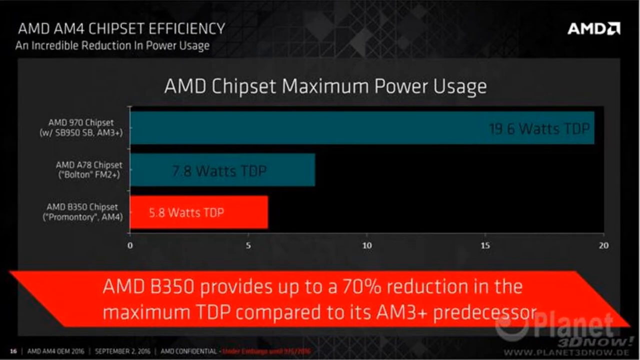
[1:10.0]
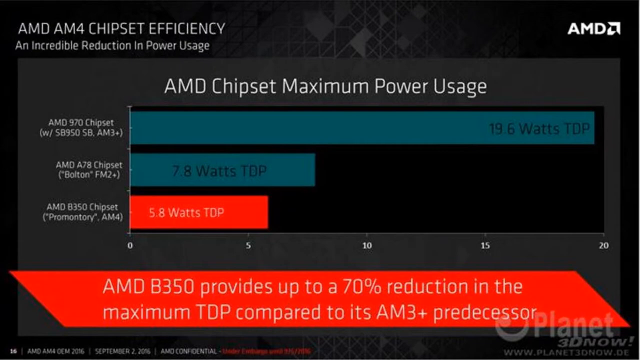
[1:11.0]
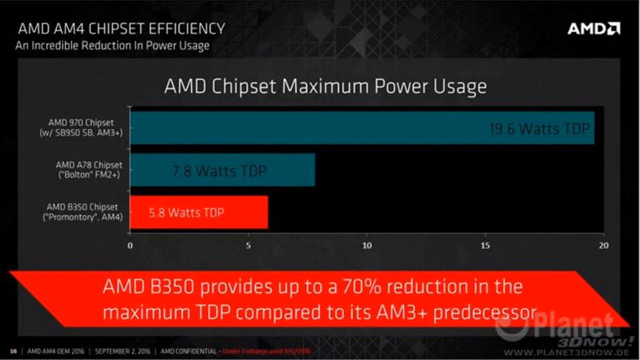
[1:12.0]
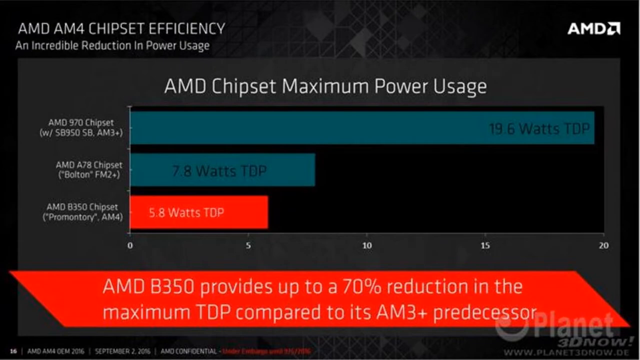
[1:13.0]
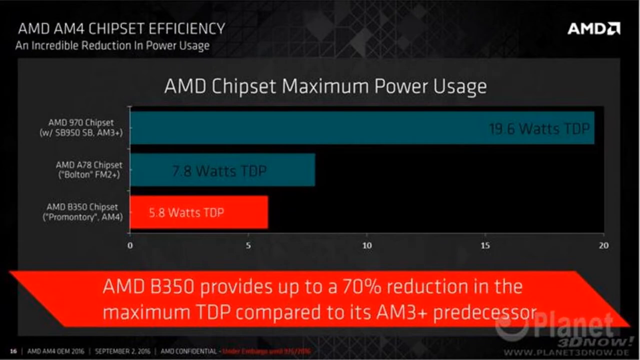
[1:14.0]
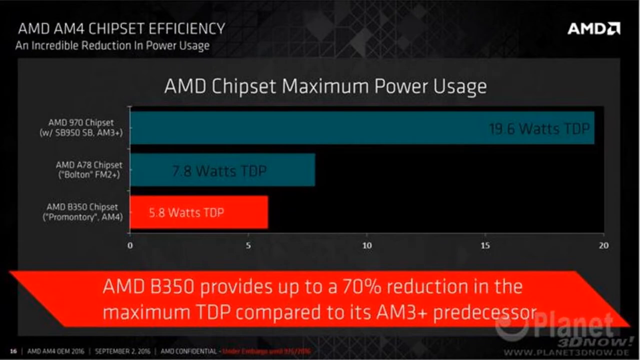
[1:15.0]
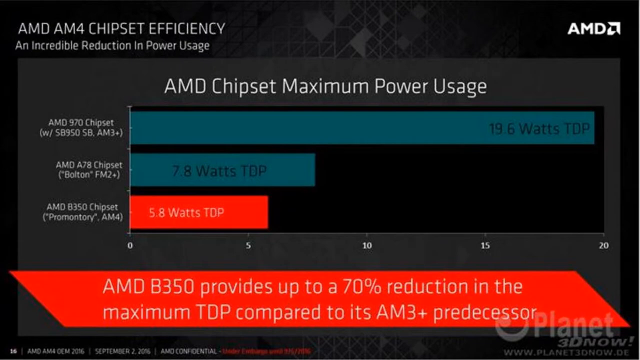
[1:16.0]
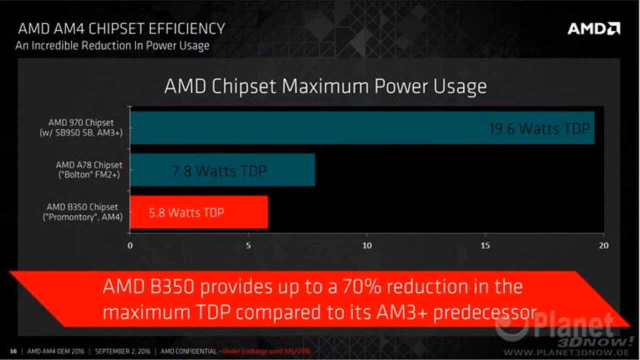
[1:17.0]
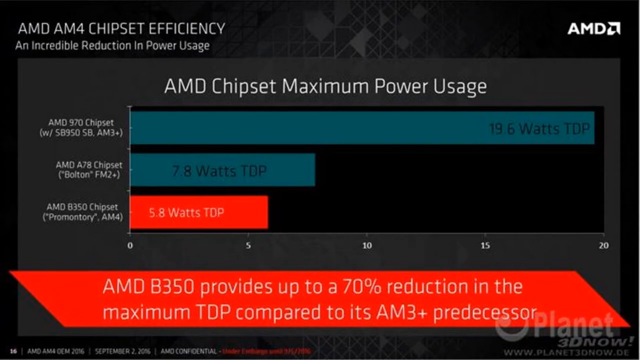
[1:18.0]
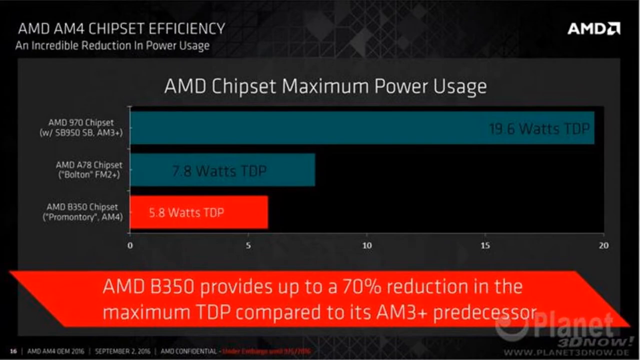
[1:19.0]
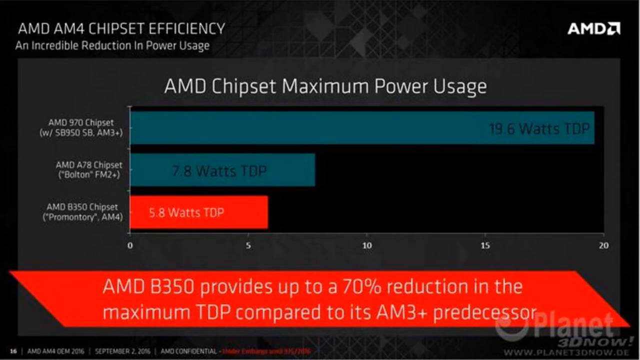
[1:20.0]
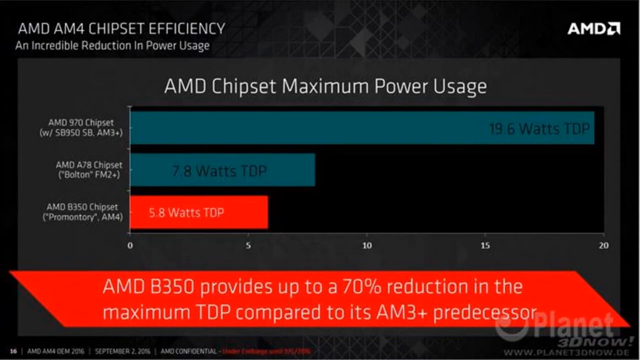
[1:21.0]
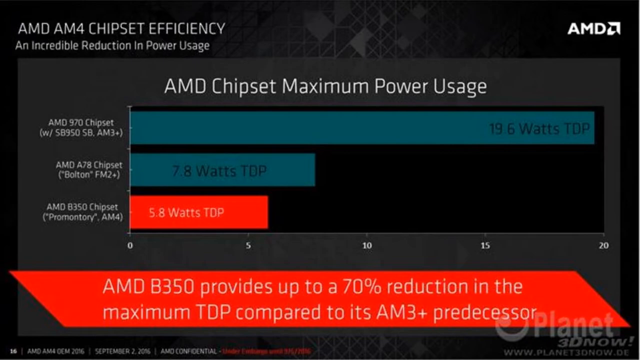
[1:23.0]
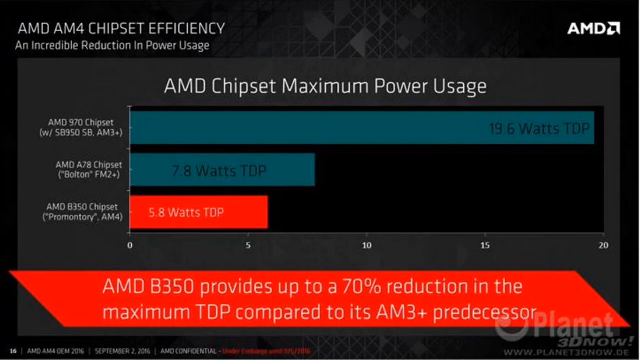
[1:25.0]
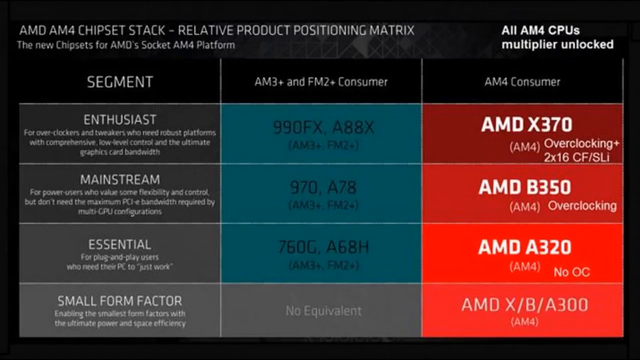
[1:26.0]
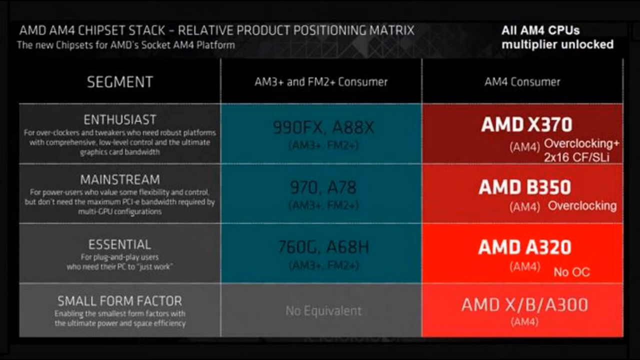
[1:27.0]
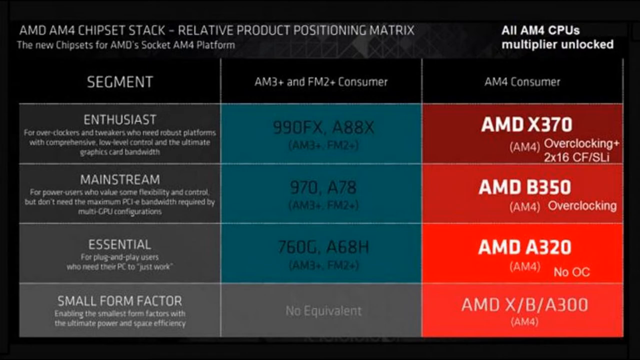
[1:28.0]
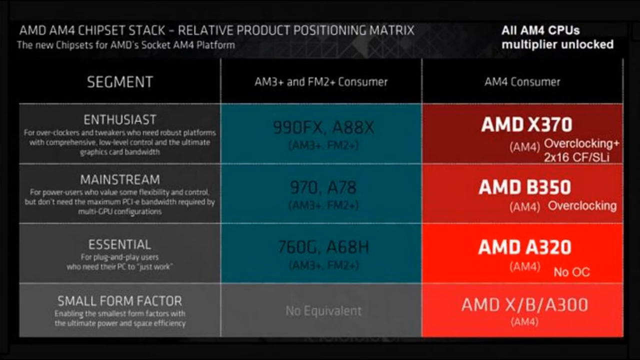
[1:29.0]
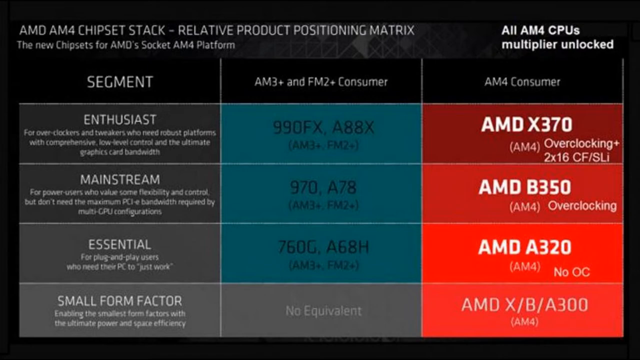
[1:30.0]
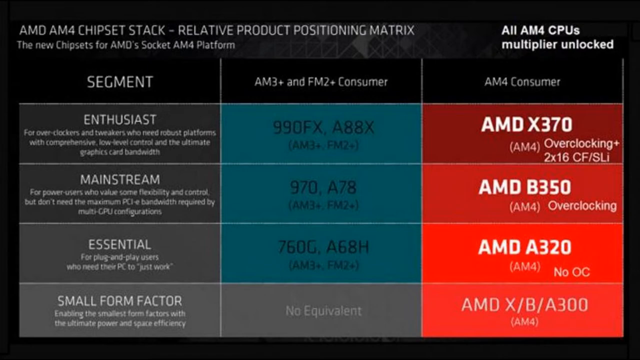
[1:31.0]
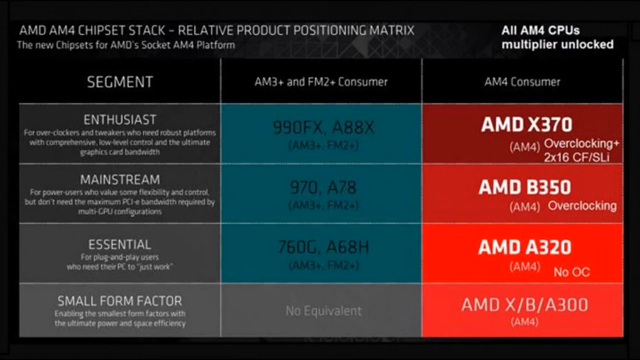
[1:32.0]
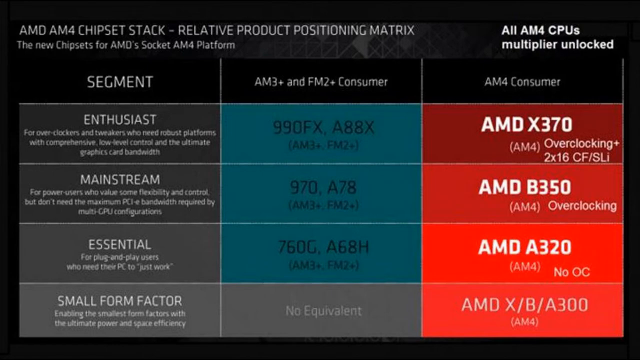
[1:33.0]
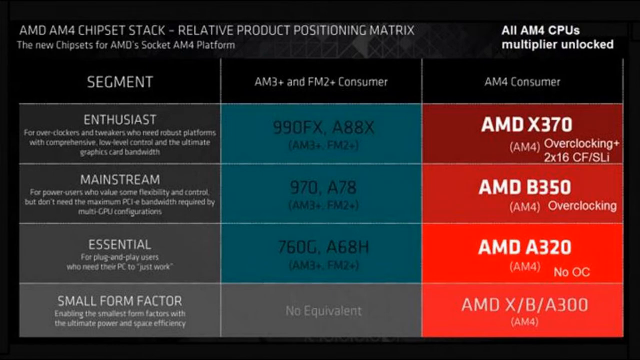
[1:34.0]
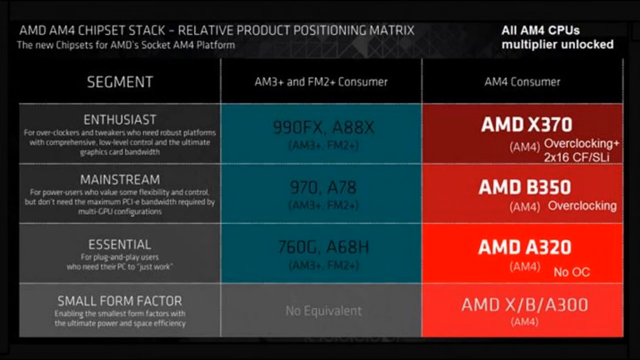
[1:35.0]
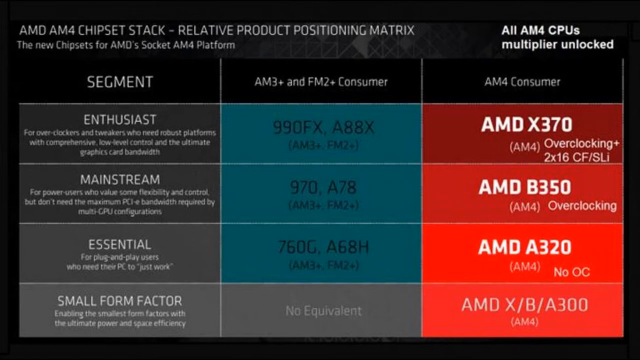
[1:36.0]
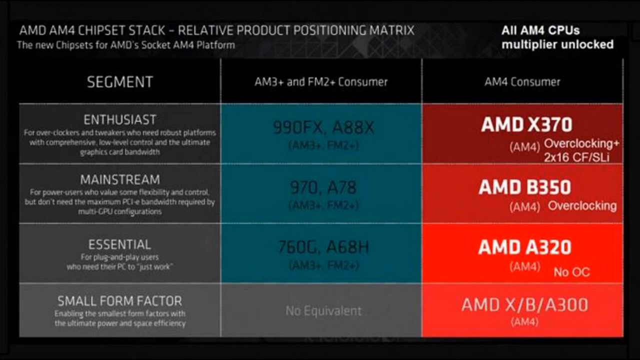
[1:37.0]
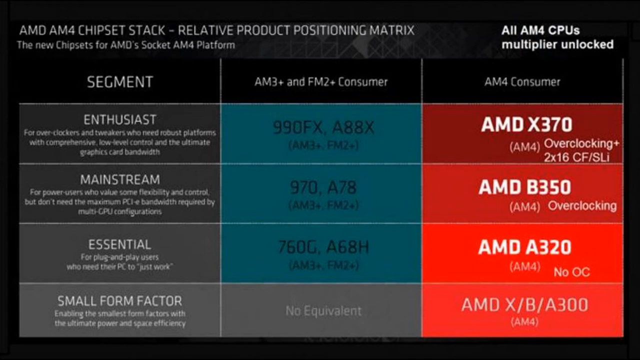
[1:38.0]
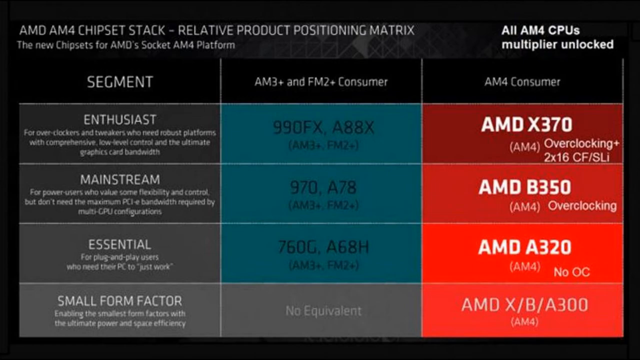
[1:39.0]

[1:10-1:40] The AMD AM4 chipset efficiency chart stays on screen. The video then switches to a table with the headers segment, AM3+ and FM2+ consumer, and AM4 consumer. In the enthusiast row, the options are the 990FX (AM3+) or the A88X (FM2+), versus the AM4 AMD X370 with overclocking. The mainstream row, described as for power users who value some flexibility and control but don't need the maximum PCIe bandwidth required by multi-CPU configuration, lists the 970 for AM3+, the A78 for FM2+, and the B350 for AM4. Below that, the essential row lists the 760G for AM3+ or the A68H for FM2+, and, in a red background, the AM4 AMD A320 with no overclocking. There is one more row, for small form factor.